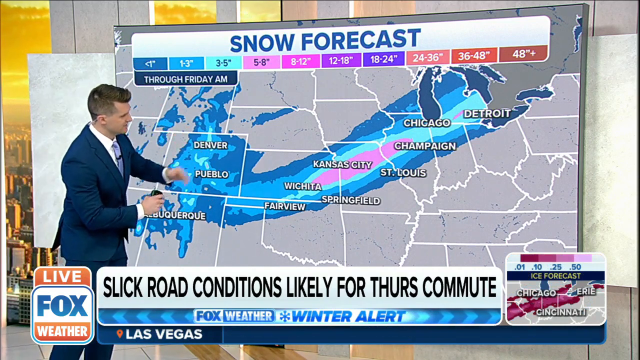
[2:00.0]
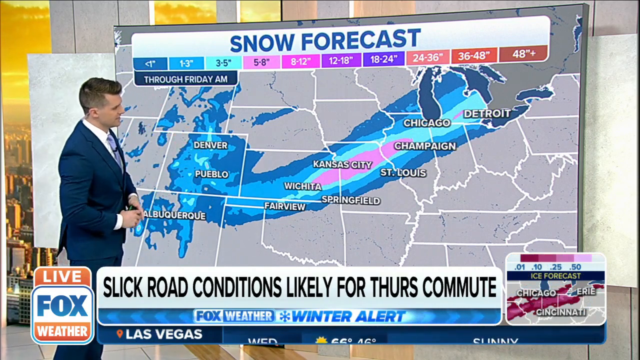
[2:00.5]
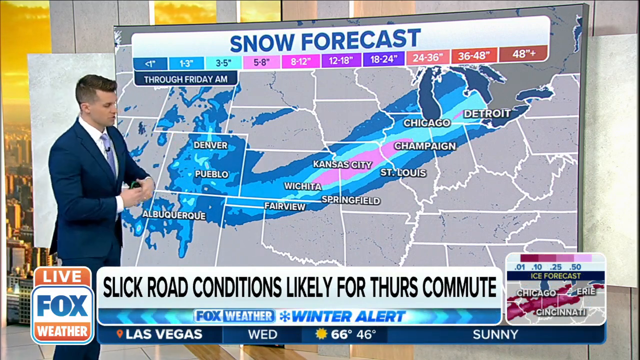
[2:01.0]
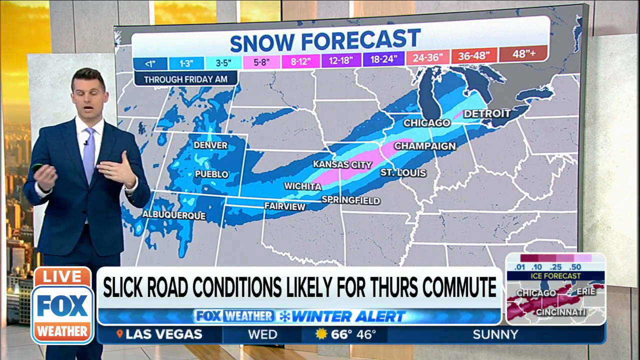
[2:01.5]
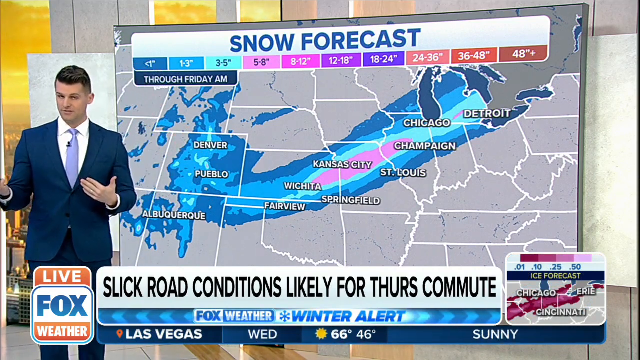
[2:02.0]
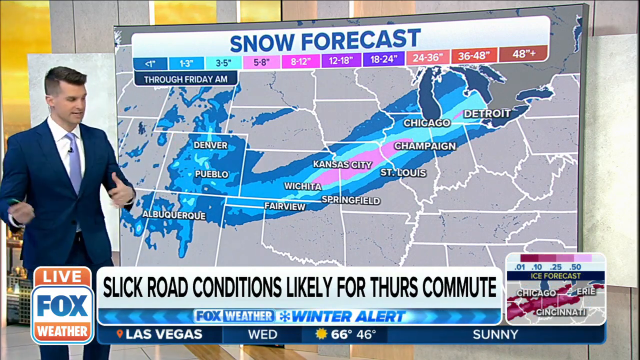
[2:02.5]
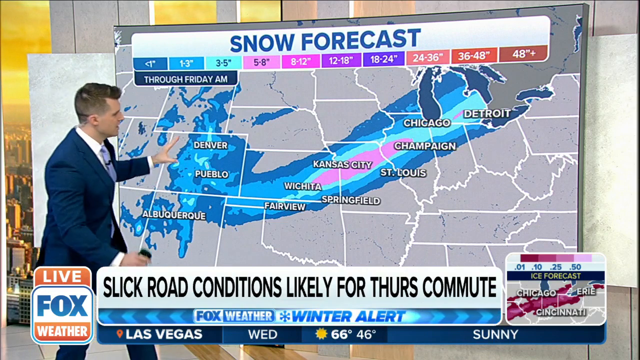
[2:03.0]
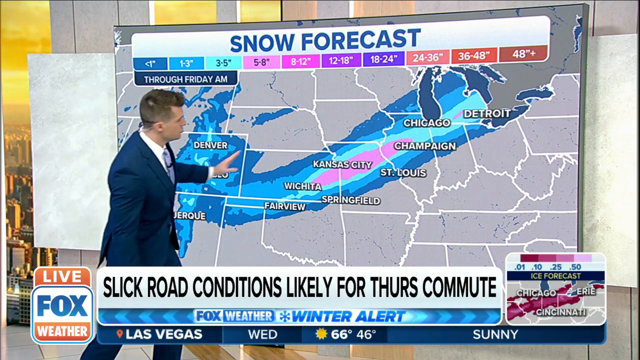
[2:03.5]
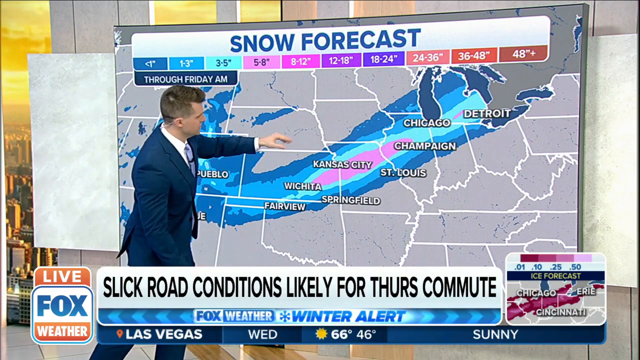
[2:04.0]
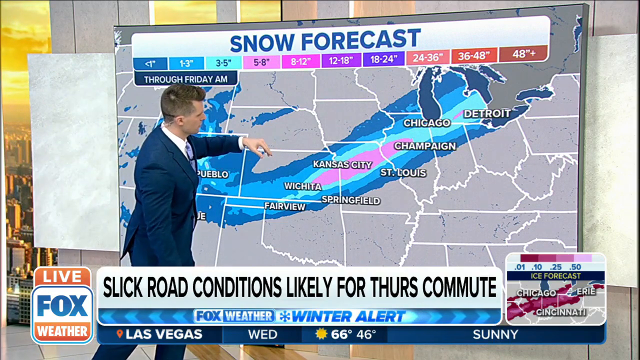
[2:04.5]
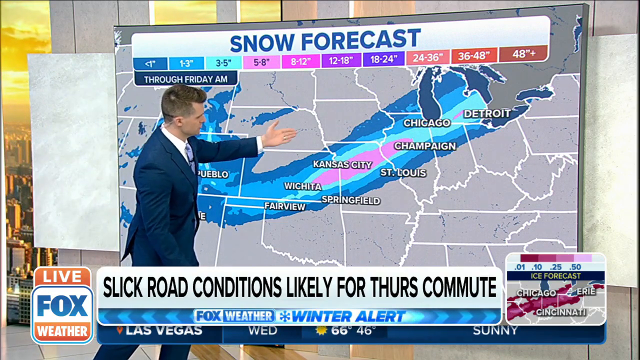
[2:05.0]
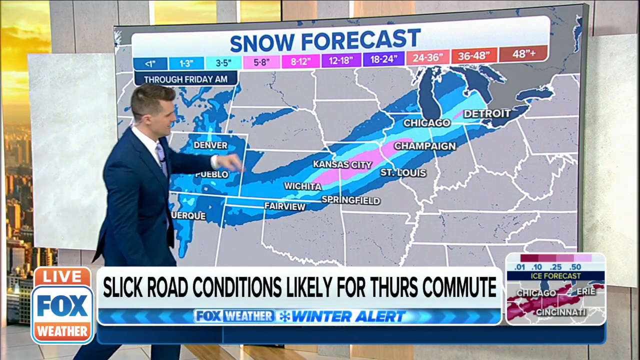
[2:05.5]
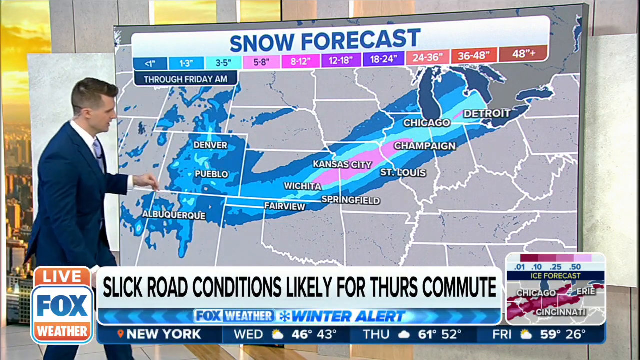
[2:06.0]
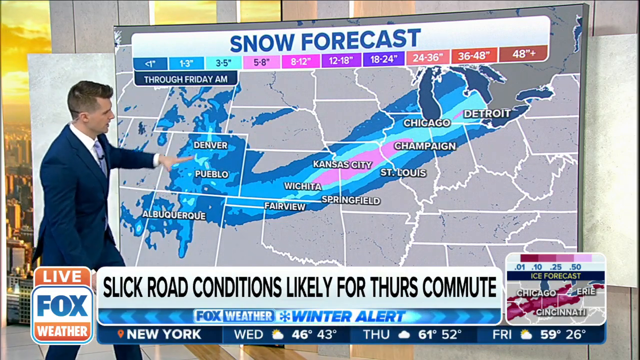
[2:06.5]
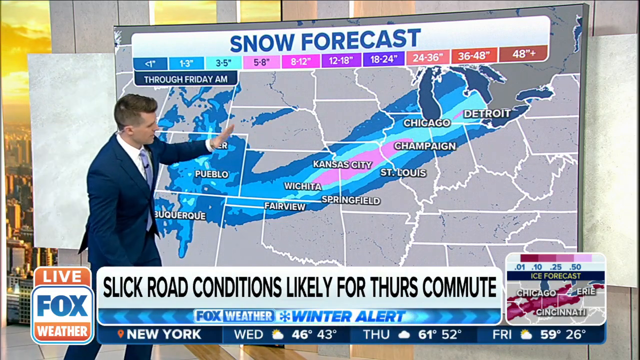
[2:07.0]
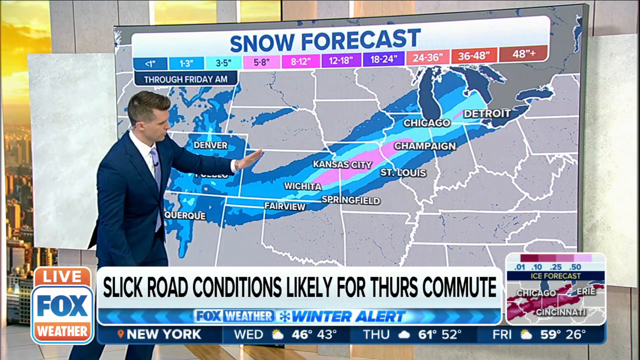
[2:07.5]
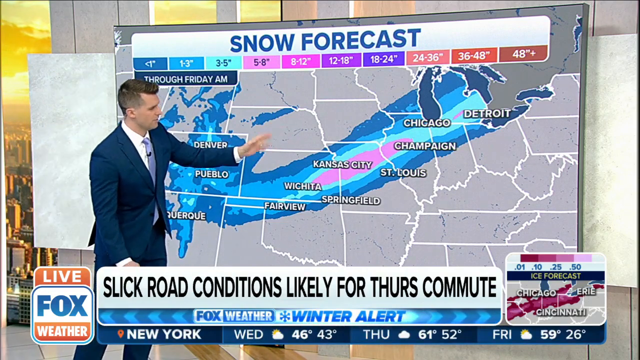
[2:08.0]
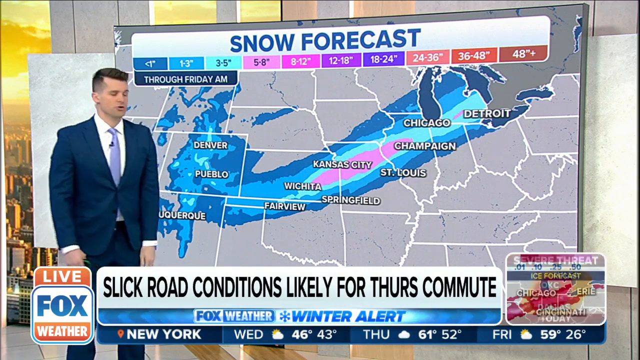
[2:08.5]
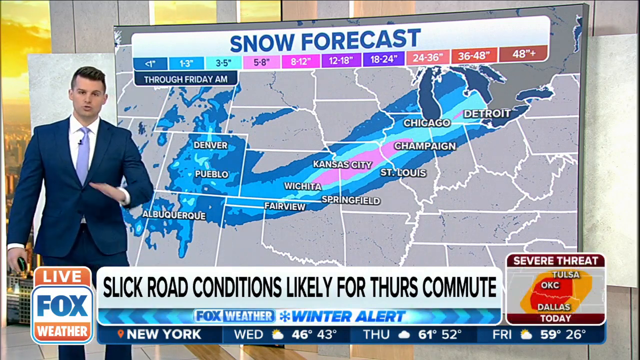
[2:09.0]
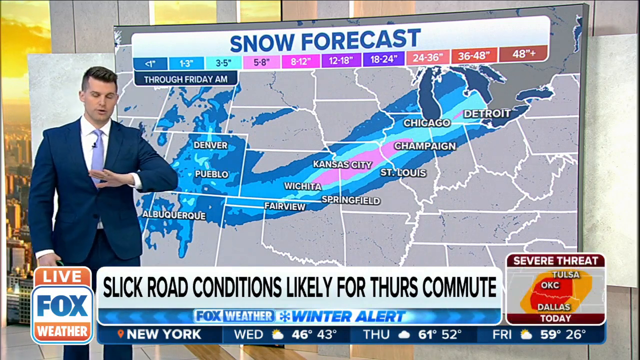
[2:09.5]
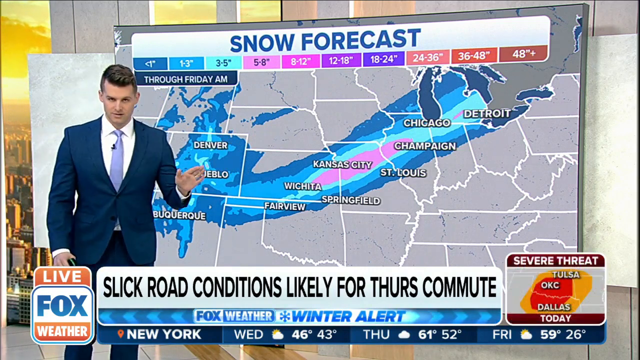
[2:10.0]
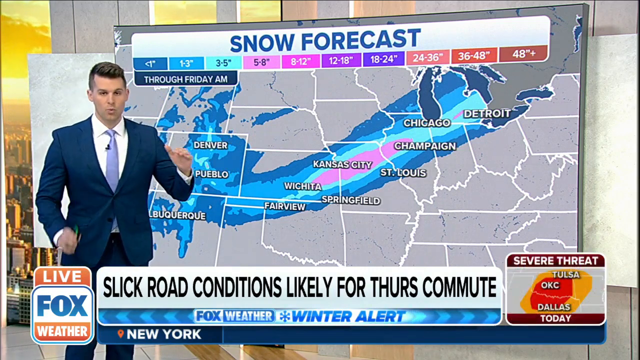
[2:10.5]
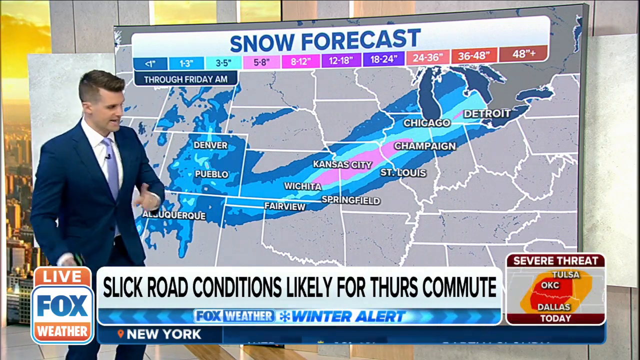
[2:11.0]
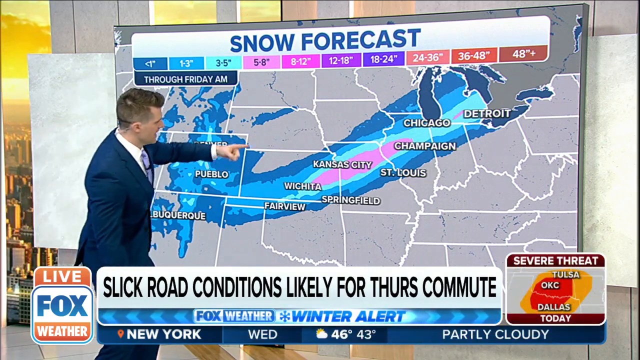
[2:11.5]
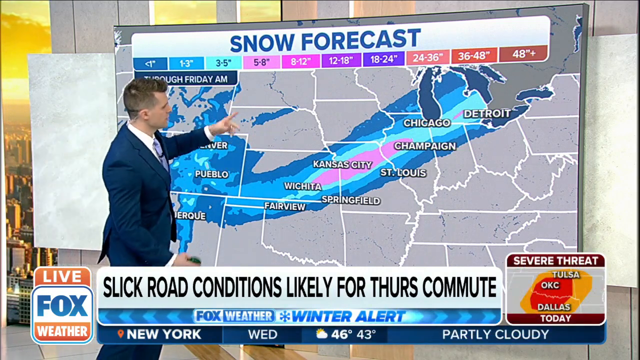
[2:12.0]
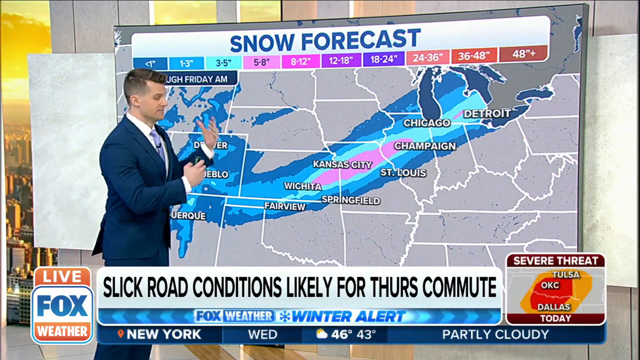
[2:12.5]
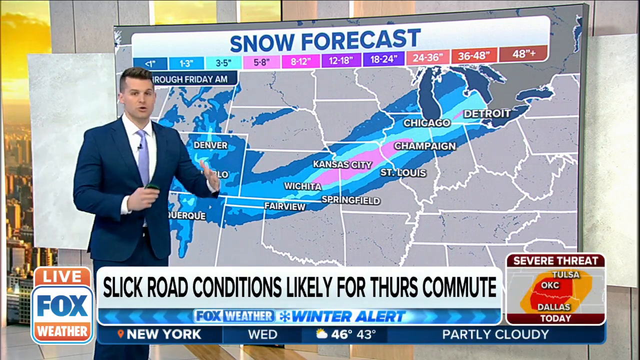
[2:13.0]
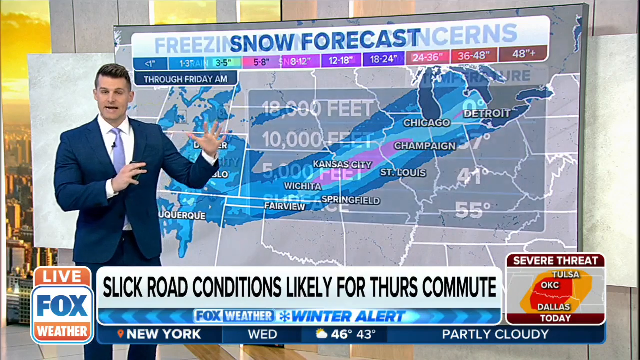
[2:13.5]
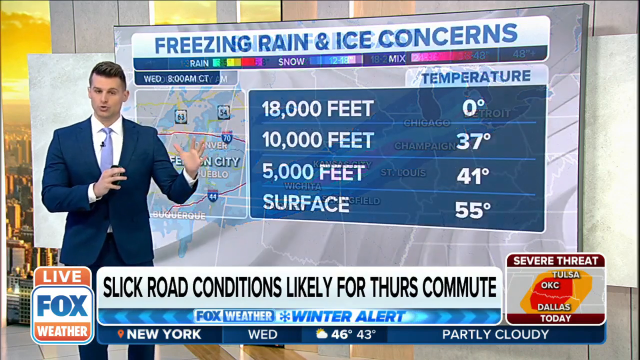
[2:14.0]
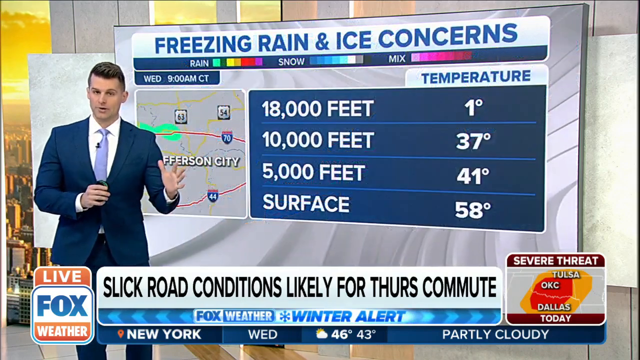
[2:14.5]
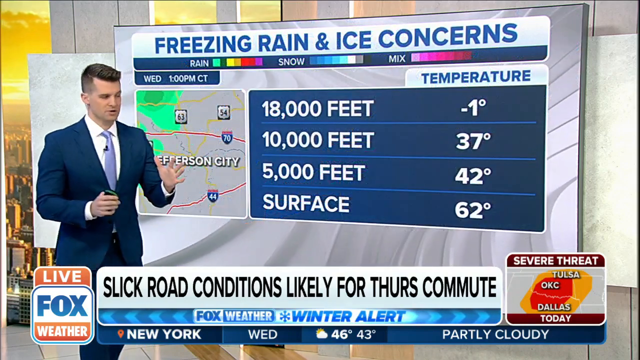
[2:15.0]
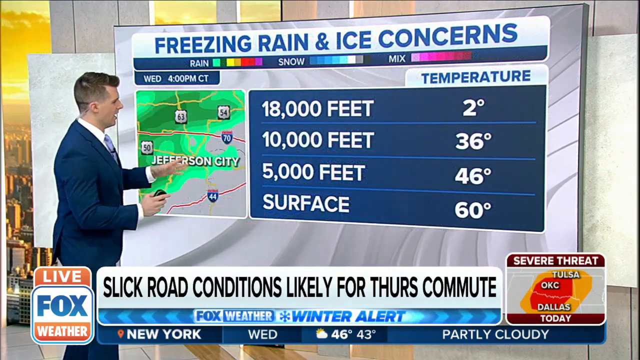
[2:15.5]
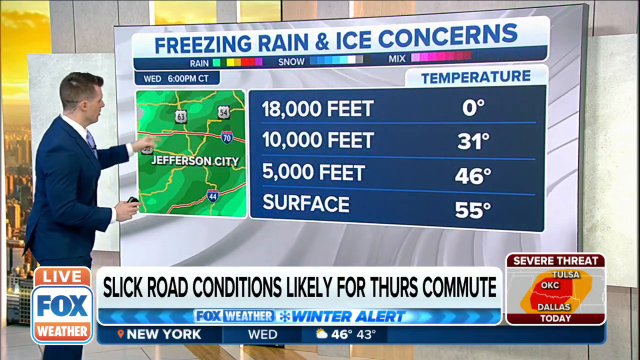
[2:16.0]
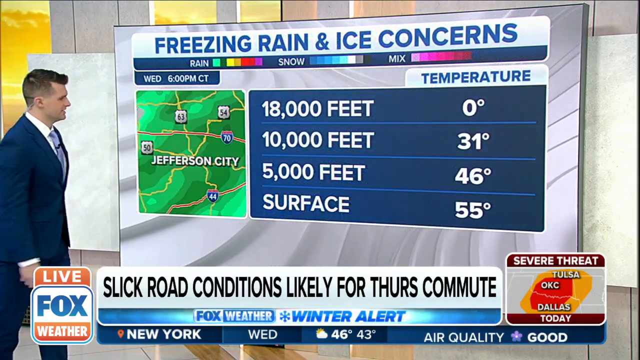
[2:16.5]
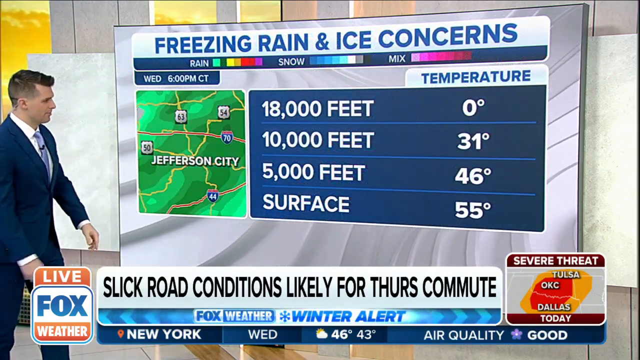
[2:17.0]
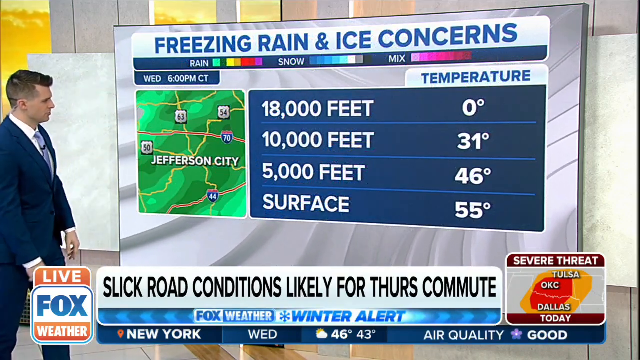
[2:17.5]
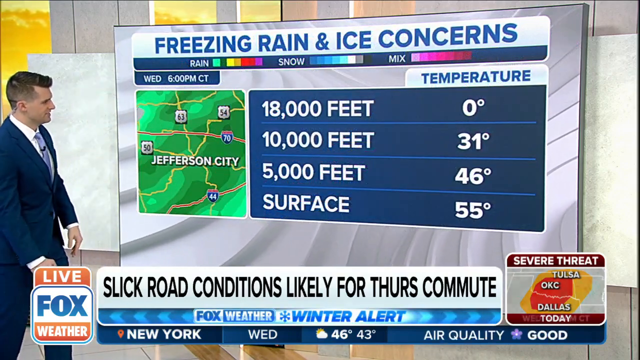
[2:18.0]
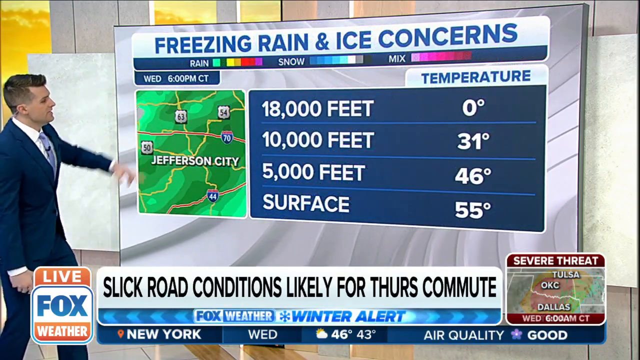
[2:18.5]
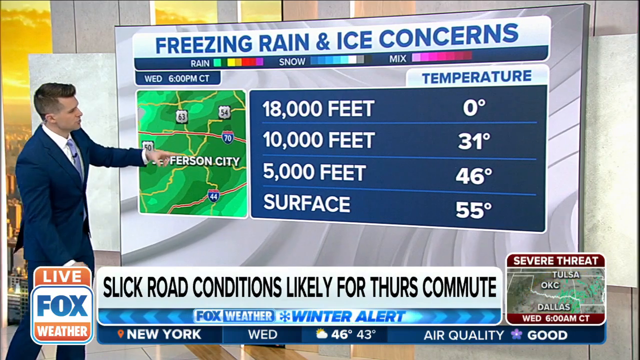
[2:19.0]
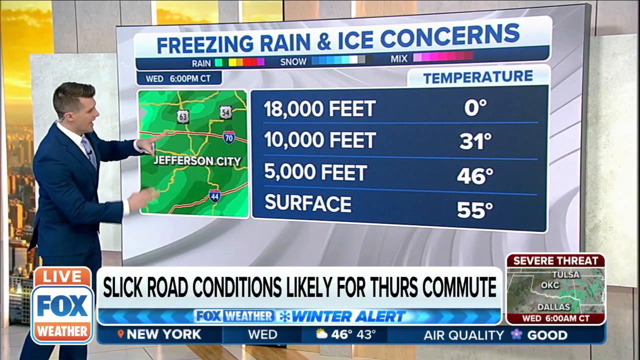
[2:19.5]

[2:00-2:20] The meteorologist stands in front of the board, waving his hands over Colorado and using his finger to trace the storm's eastward path. He then points with his finger at a section over Jefferson City, where metrics are shown: at 18,000 feet, 0 Fahrenheit; at 10,000 feet, 31 Fahrenheit; at 5,000 feet, 46 Fahrenheit; and at the surface, 55 degrees Fahrenheit. The caption at the bottom reads "slick road conditions likely for Thursday's commute," and the forecast refers to Friday morning.